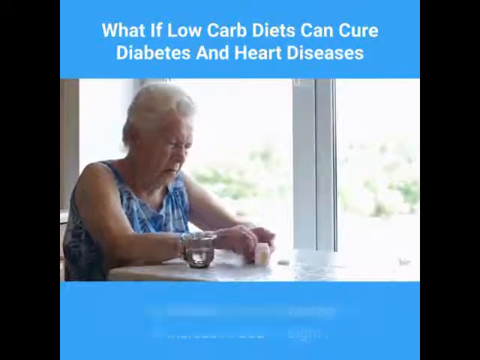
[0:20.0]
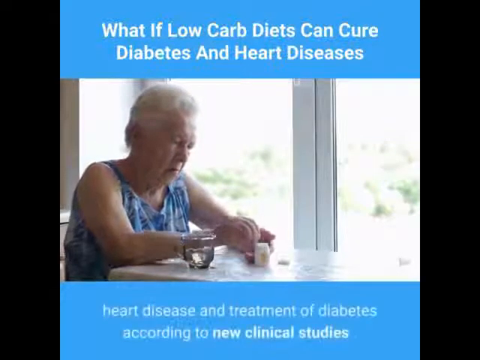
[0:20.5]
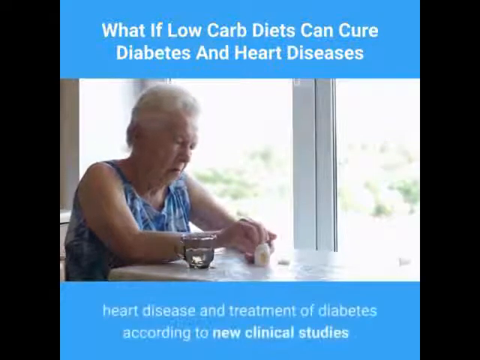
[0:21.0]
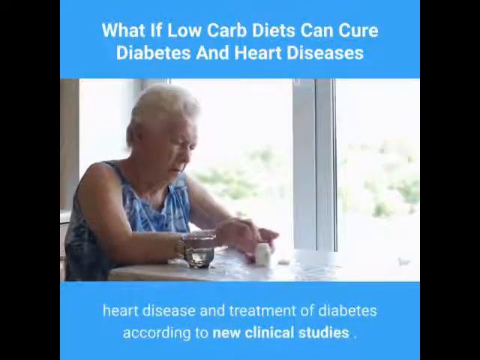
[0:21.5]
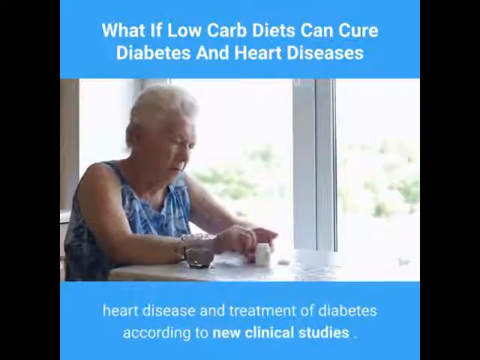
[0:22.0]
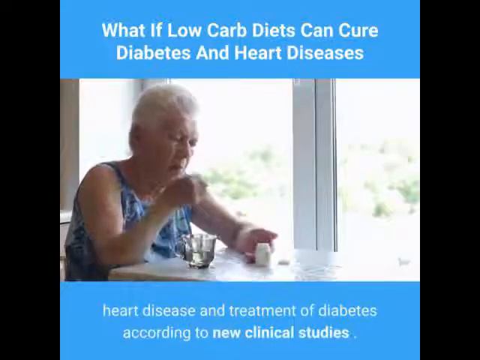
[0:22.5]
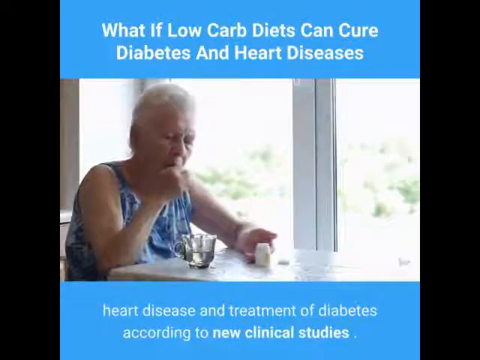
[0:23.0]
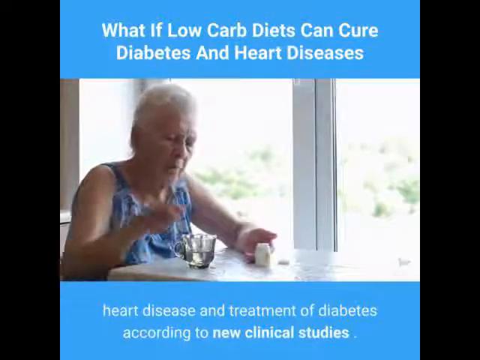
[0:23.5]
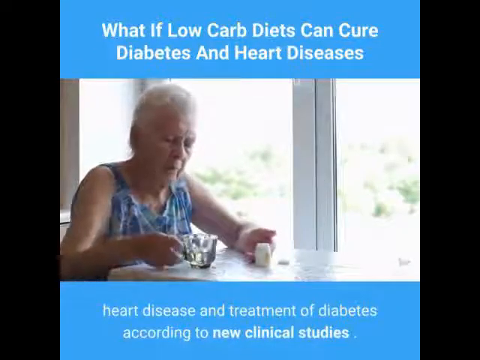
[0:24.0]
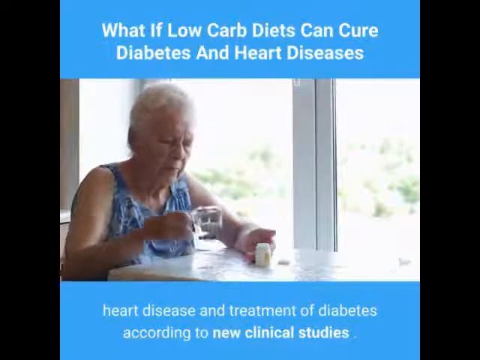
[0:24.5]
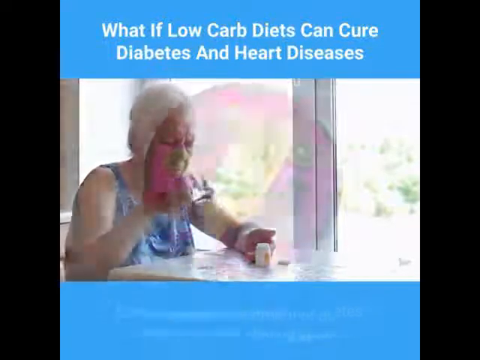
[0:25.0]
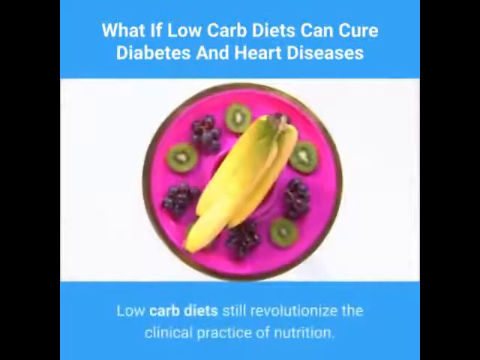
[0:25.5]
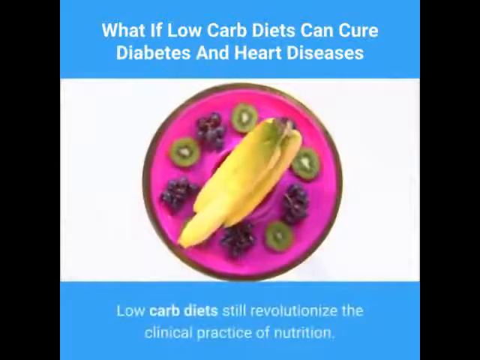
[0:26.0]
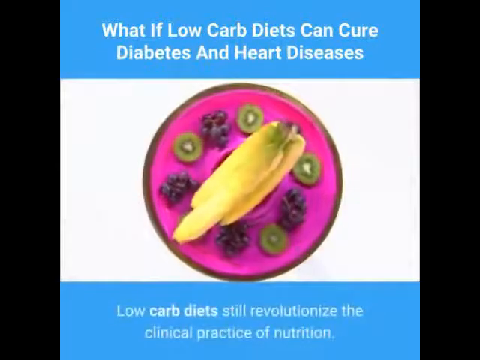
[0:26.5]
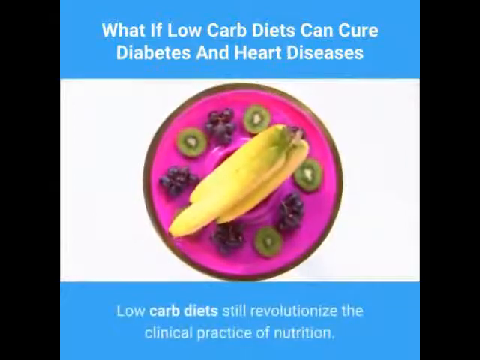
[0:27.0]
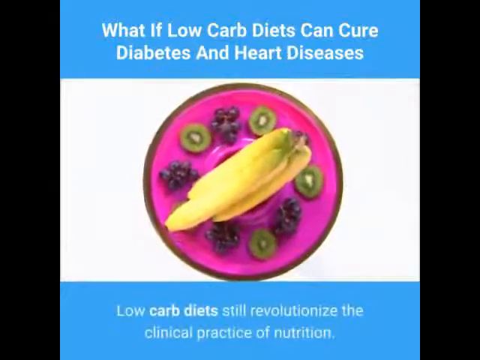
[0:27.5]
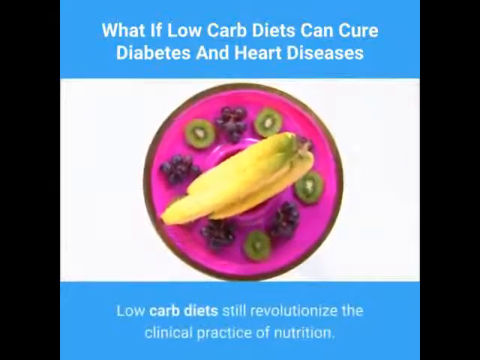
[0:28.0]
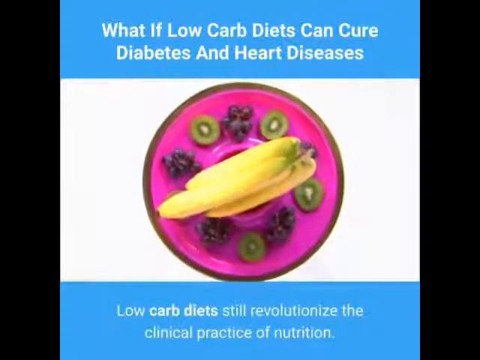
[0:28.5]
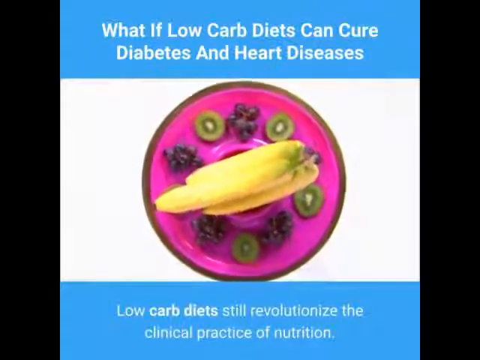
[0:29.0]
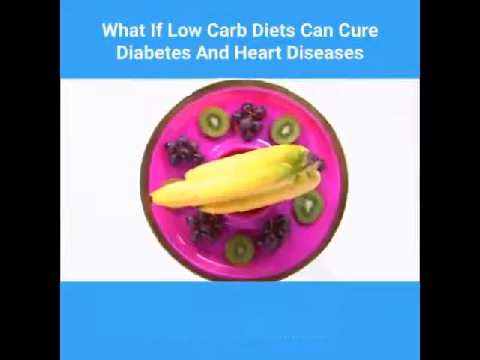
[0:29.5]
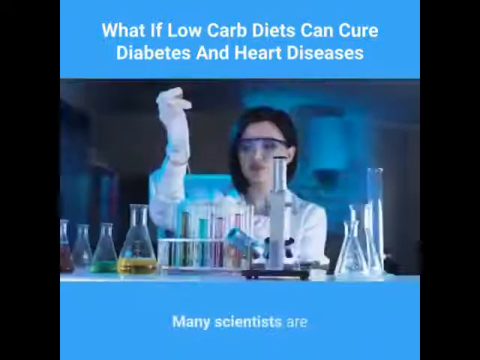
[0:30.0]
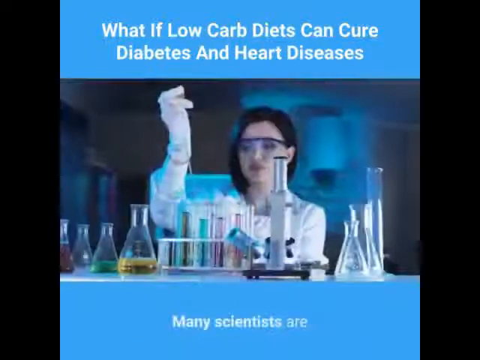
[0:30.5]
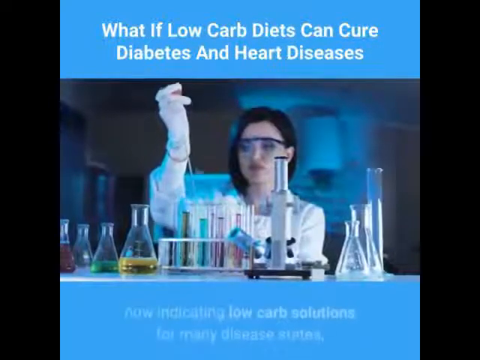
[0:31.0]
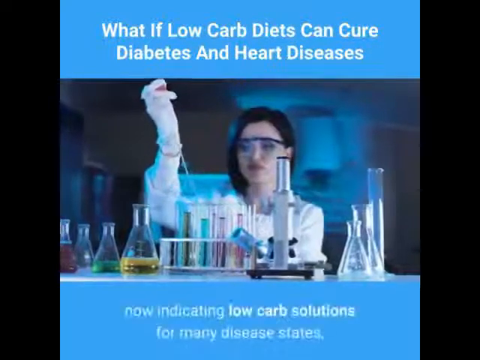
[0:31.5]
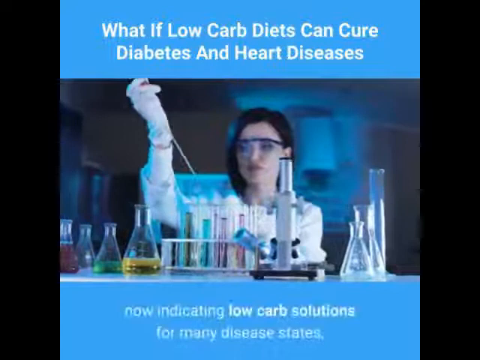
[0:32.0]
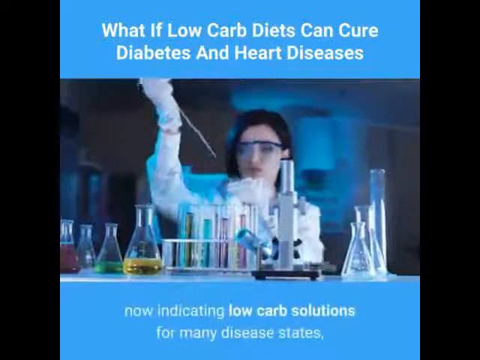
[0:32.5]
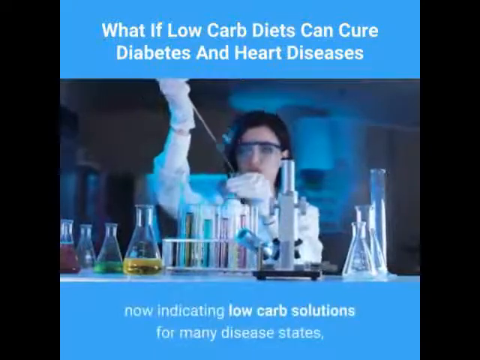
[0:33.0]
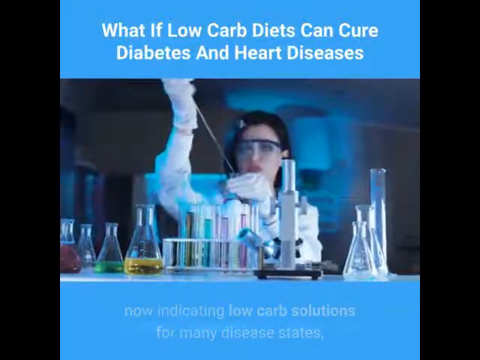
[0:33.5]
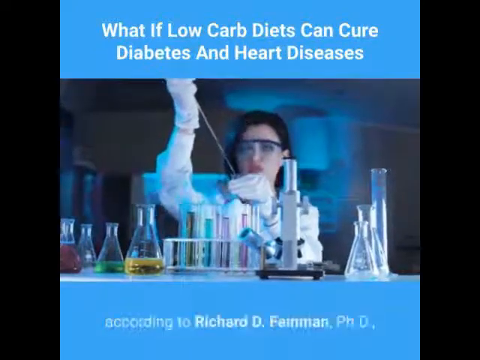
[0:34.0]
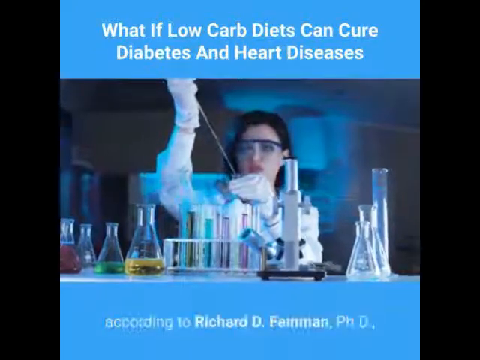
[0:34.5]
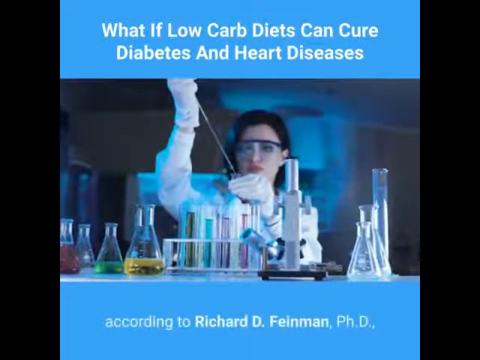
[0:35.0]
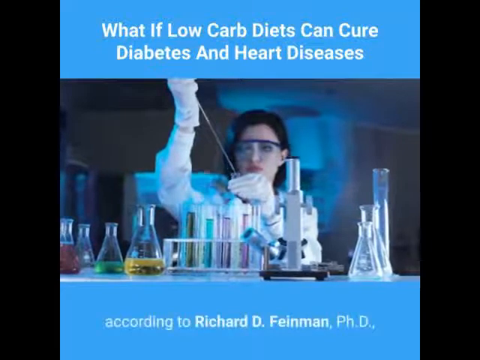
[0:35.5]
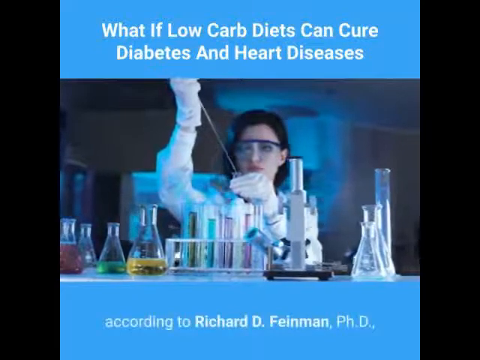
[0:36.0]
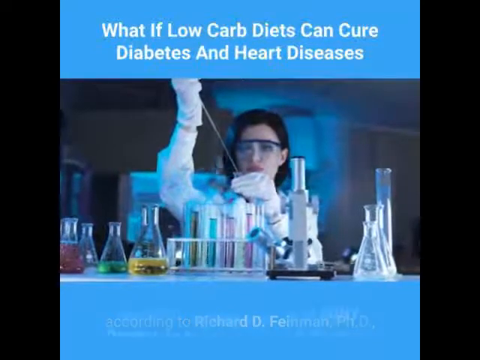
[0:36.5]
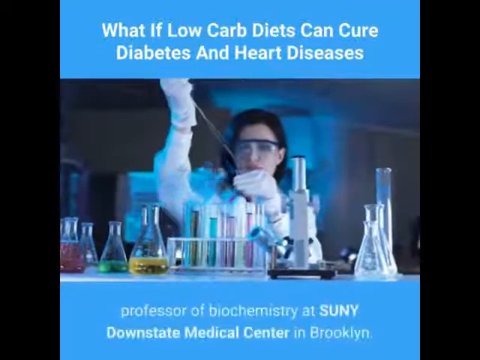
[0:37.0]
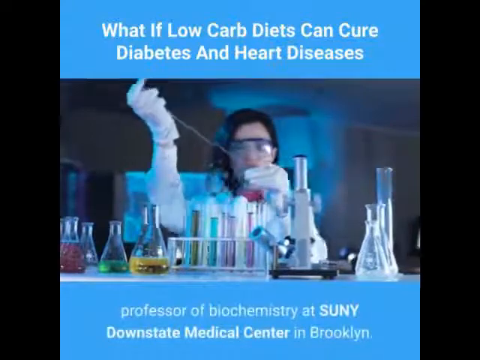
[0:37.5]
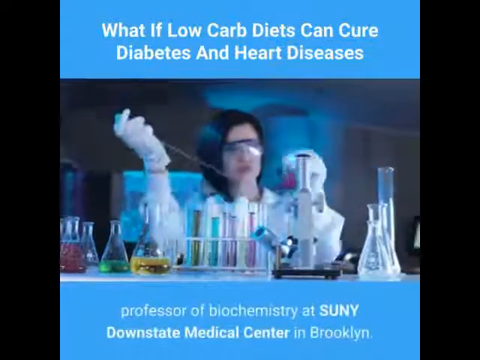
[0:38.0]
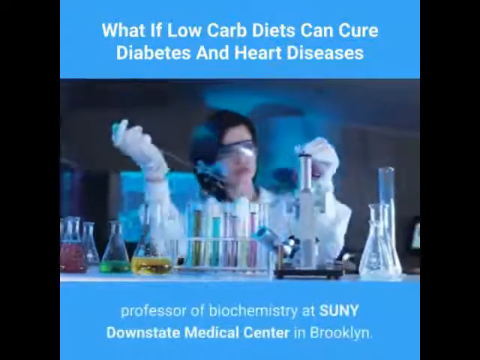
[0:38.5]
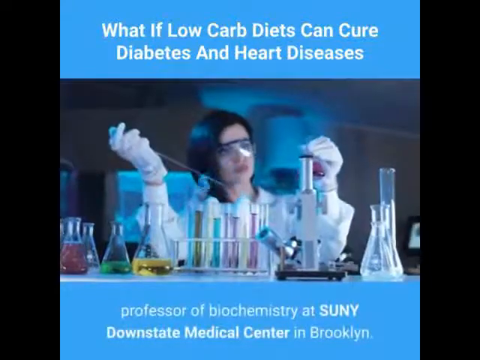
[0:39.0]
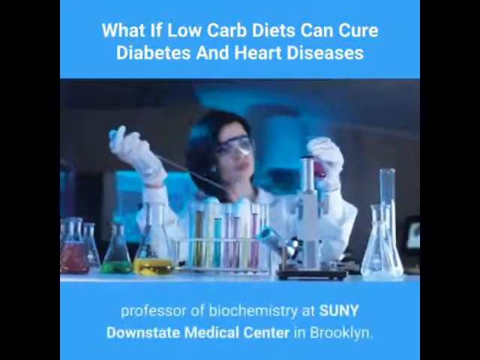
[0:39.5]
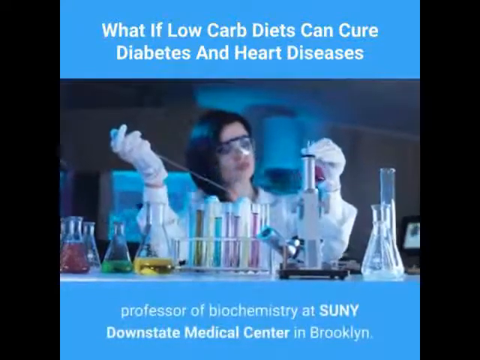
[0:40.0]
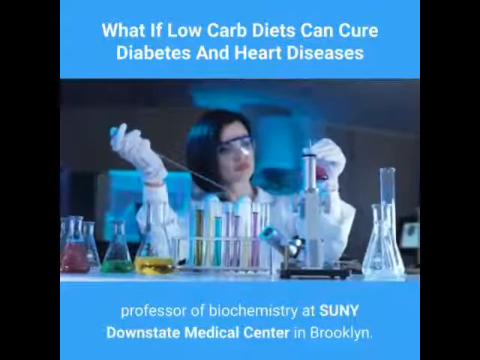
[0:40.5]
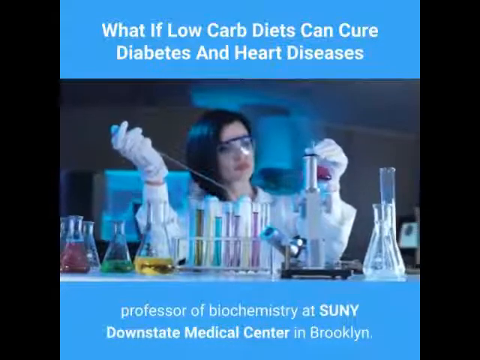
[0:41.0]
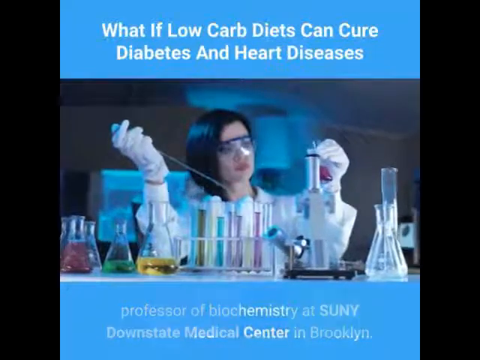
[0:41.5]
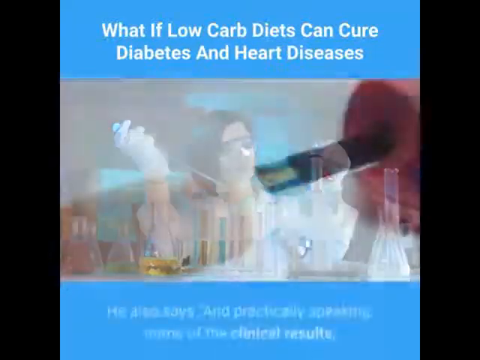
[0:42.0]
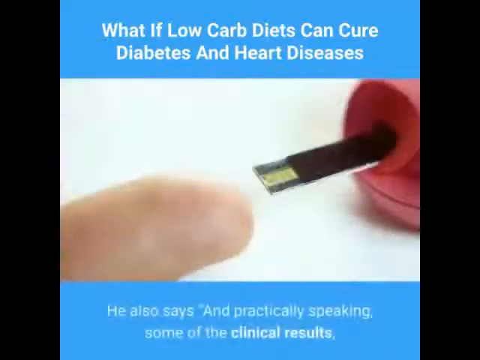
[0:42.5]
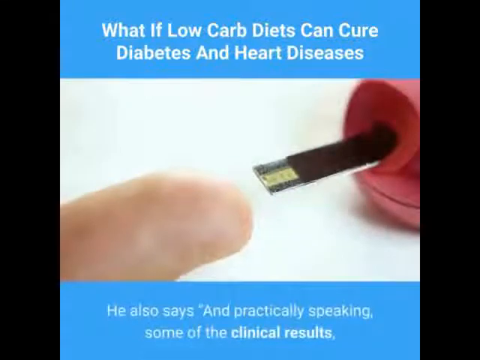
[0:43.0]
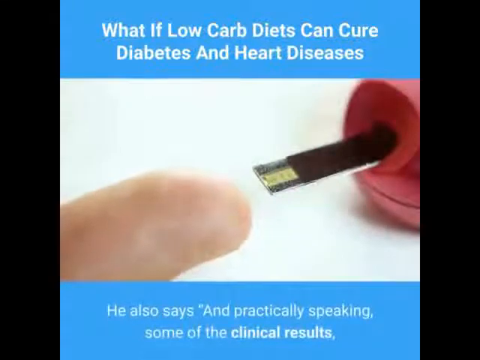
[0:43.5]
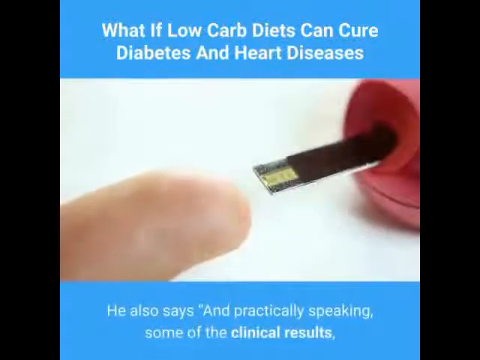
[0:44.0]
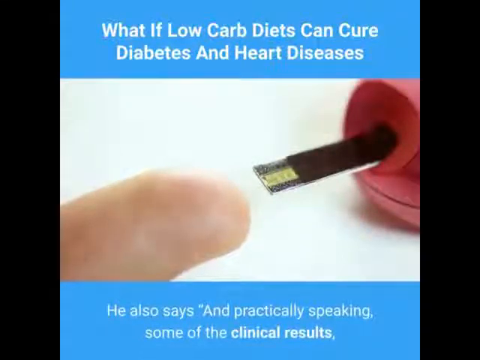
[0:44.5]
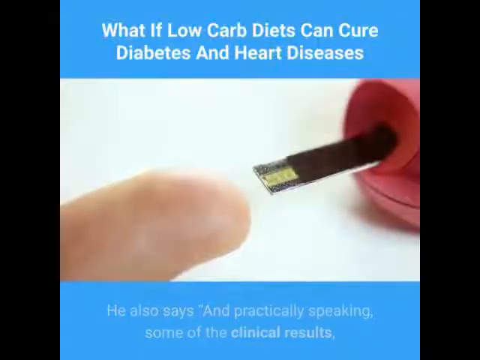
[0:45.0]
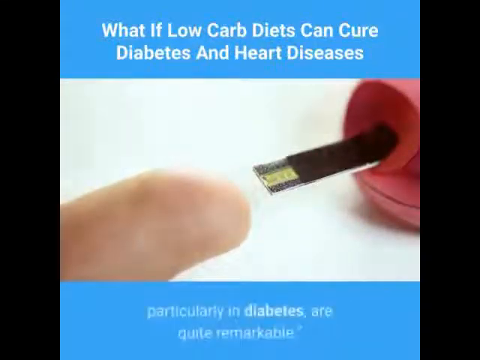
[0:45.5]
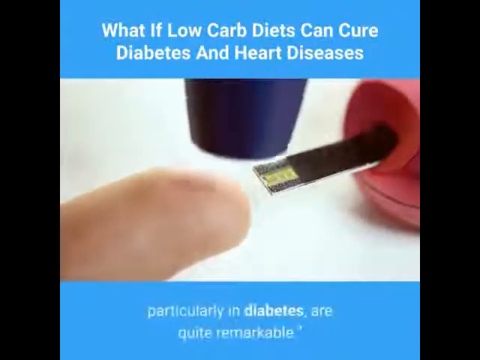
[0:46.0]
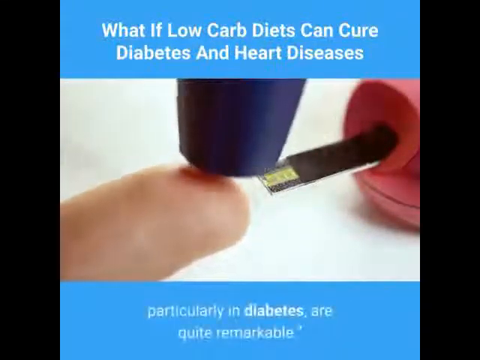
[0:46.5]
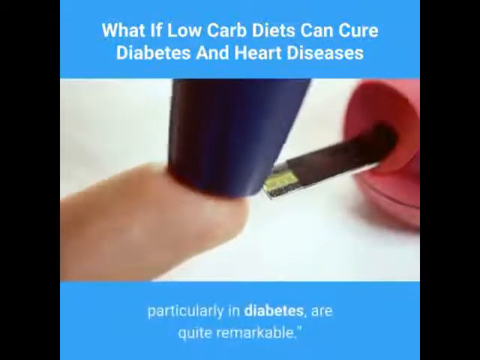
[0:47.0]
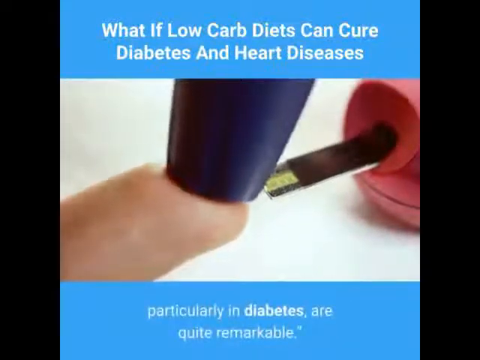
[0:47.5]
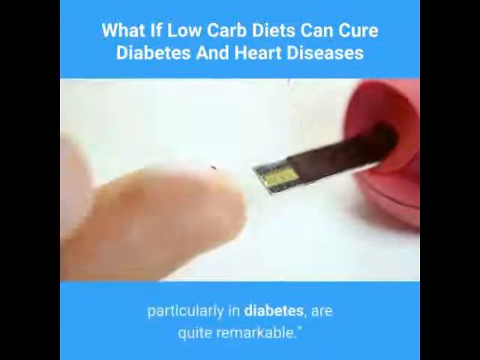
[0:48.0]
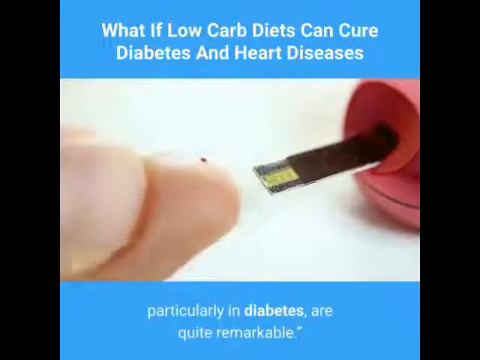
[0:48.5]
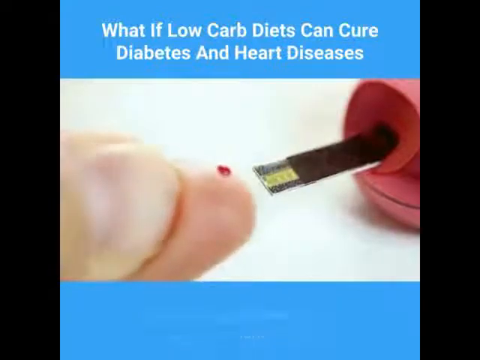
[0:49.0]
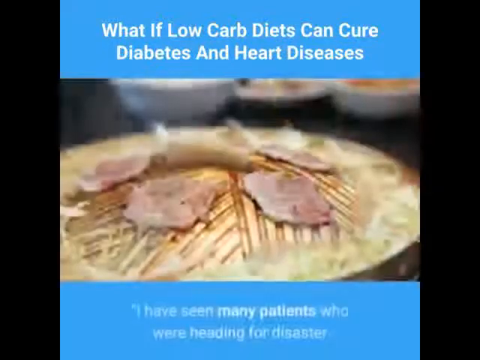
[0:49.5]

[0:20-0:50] The older woman takes pills out of her left hand with her right hand, puts one back in the bottle and puts one in her mouth. She reaches with her right hand, picks up the glass mug and raises it to her mouth to drink. The next scene reads "what if low-carb diets can cure diabetes and heart disease?" A purple plate shows bananas in the middle, with avocados alternating with bunches of grapes, and text at the bottom reads "low-carb diets still revolutionize". A scientist does an experiment with glass beakers and glass bottles; the experiment is associated with a Professor of Biochemistry at SUNY Downstate in Brooklyn. Someone then takes a test, sticking it into their finger, which begins to bleed a little, while holding the other part of the testing kit in their other hand.